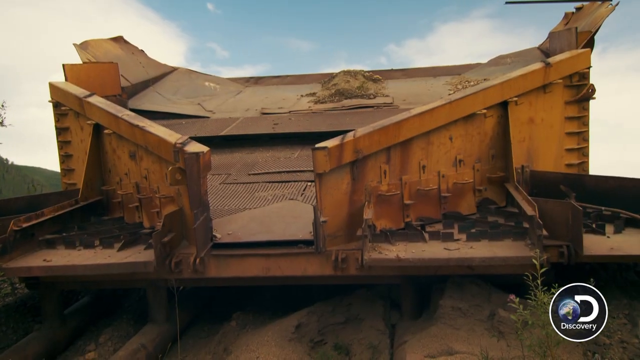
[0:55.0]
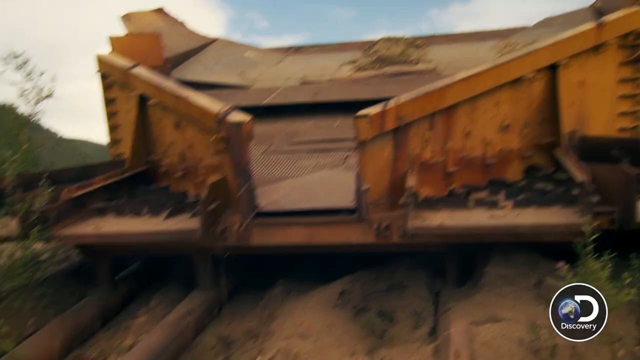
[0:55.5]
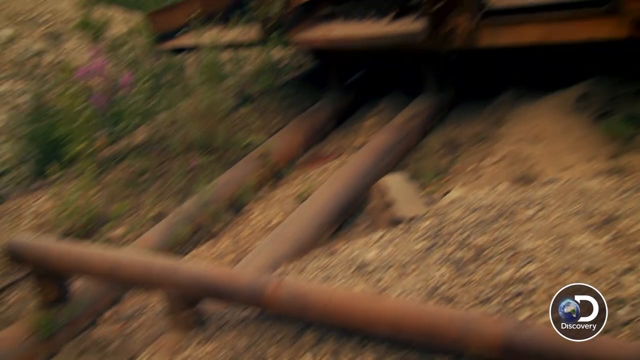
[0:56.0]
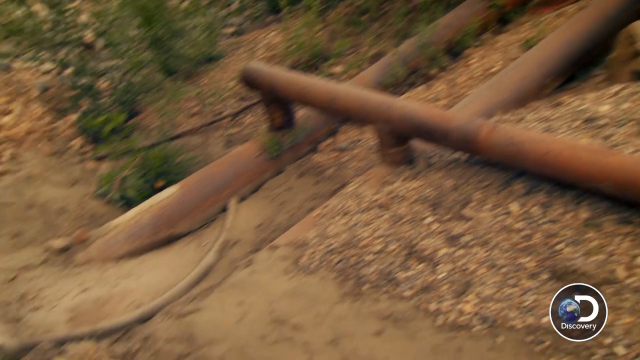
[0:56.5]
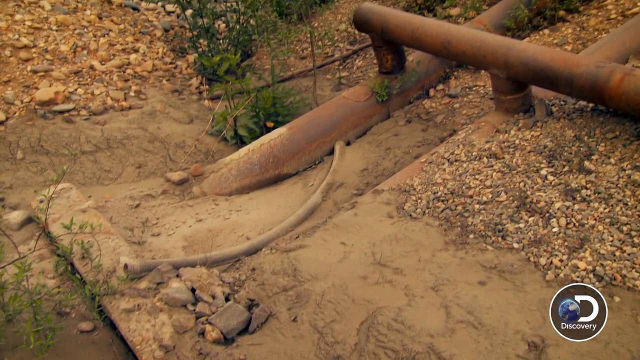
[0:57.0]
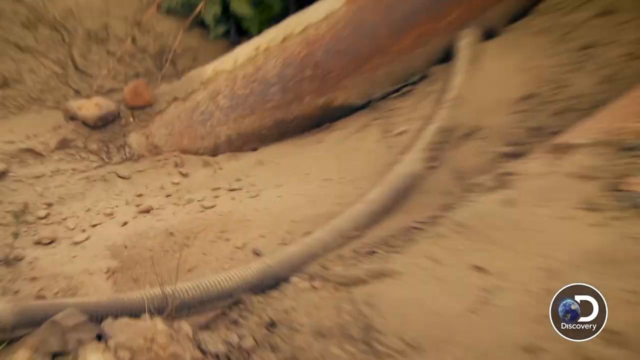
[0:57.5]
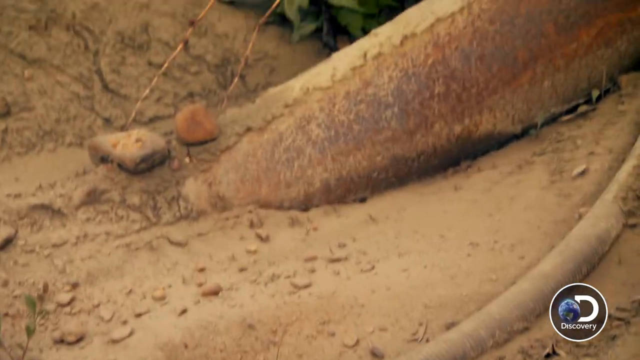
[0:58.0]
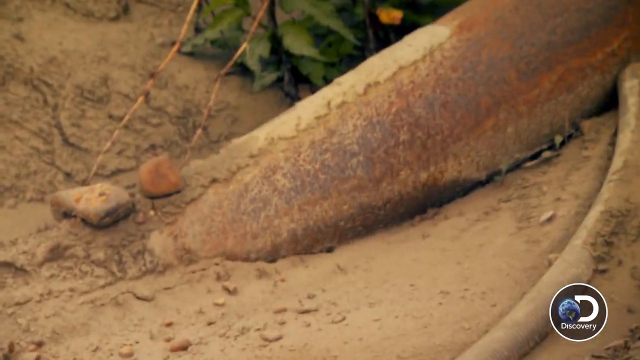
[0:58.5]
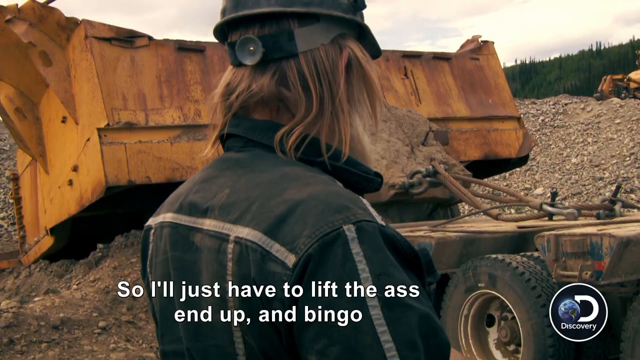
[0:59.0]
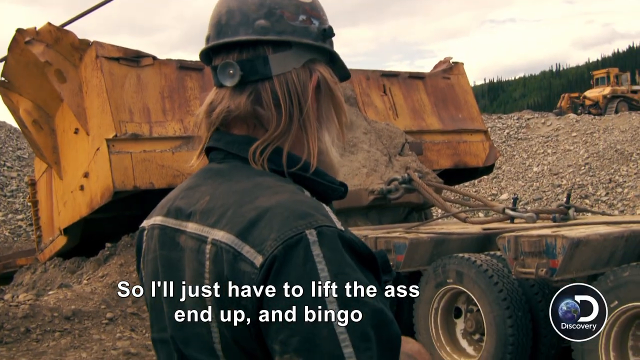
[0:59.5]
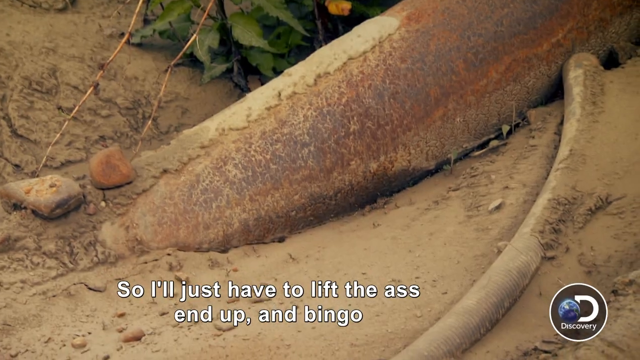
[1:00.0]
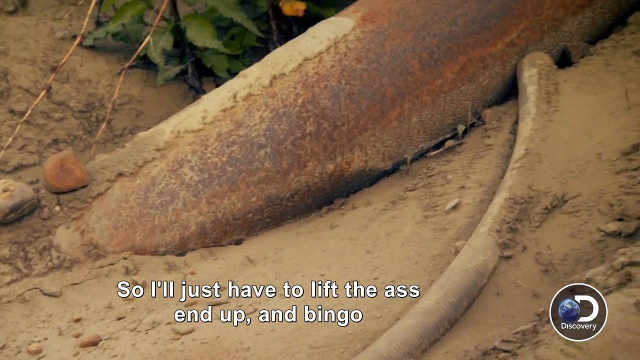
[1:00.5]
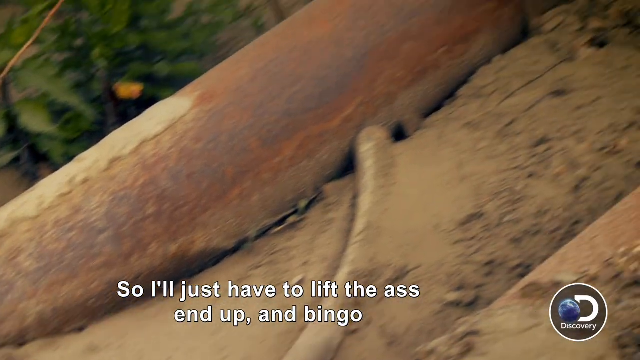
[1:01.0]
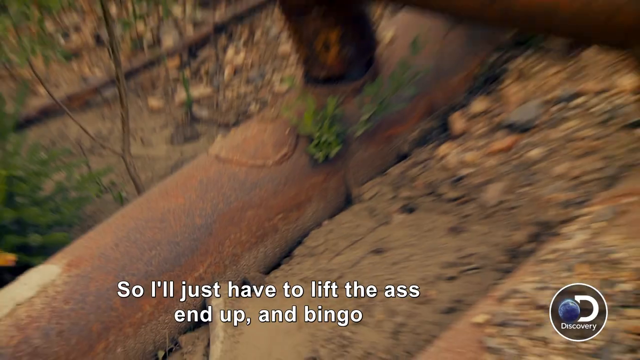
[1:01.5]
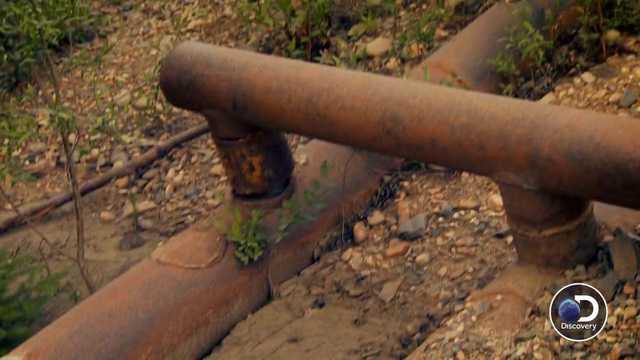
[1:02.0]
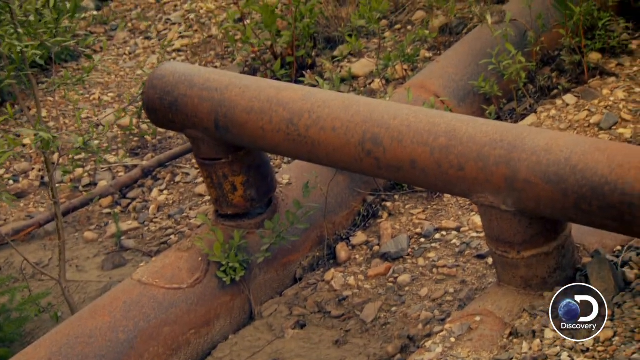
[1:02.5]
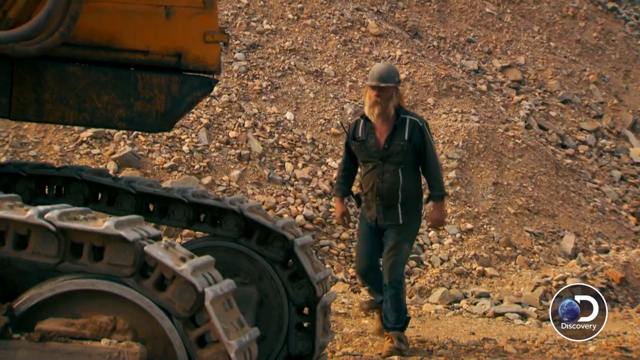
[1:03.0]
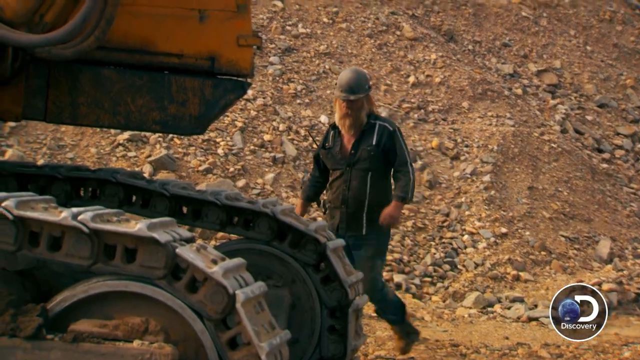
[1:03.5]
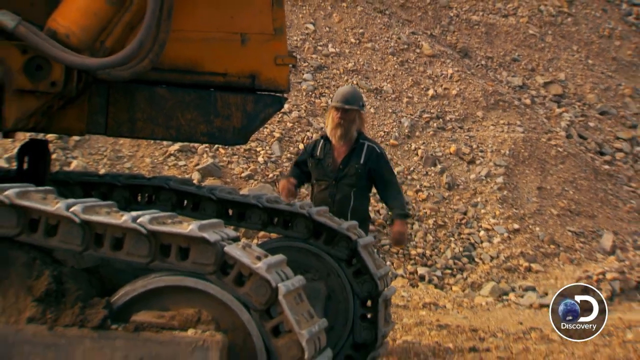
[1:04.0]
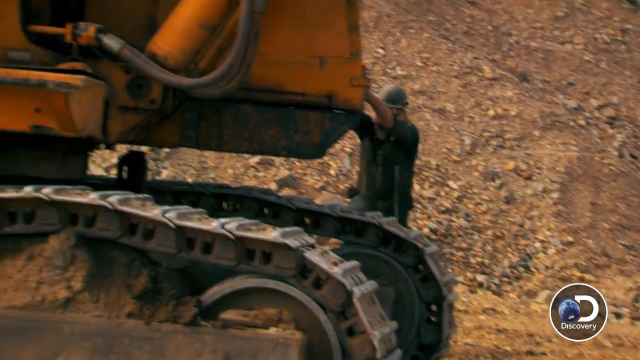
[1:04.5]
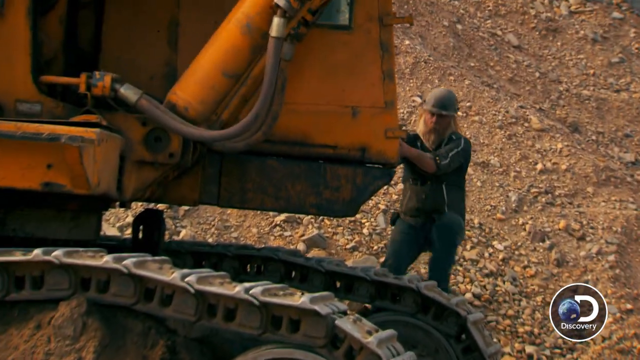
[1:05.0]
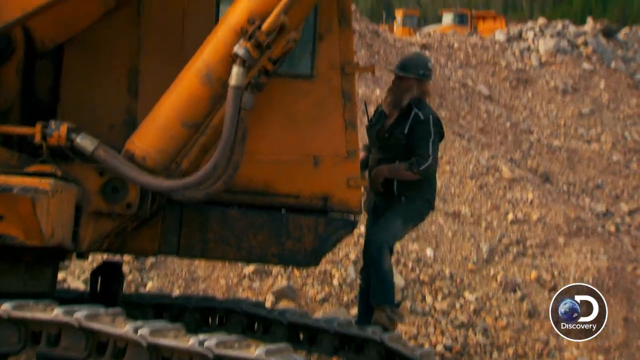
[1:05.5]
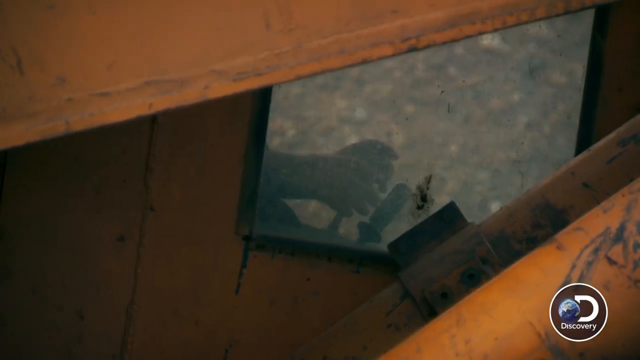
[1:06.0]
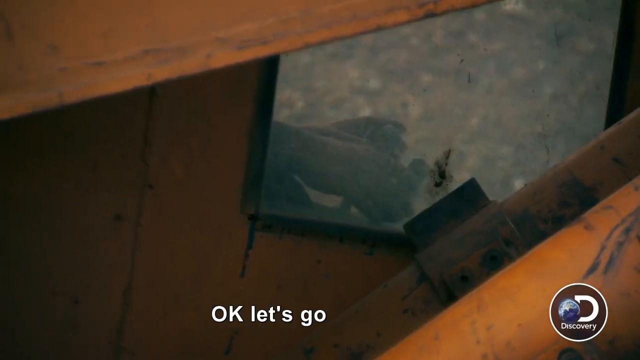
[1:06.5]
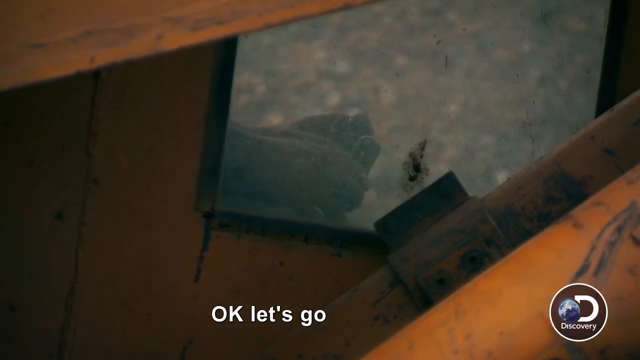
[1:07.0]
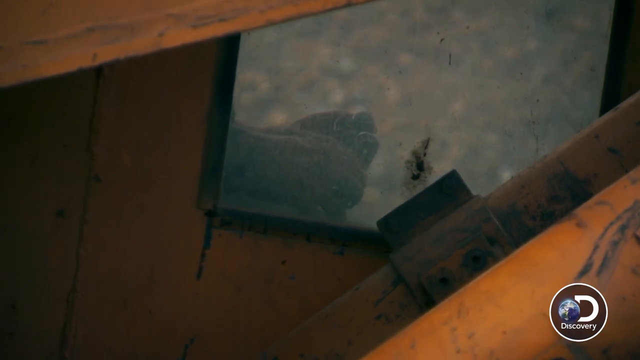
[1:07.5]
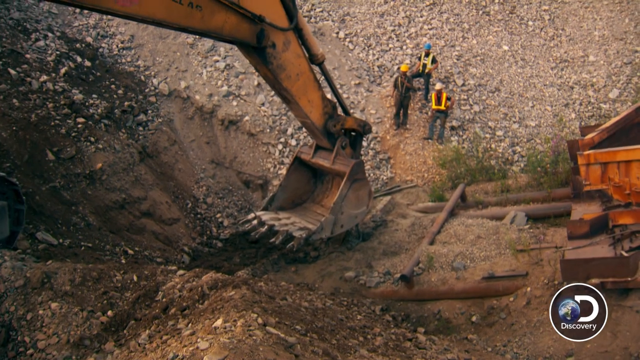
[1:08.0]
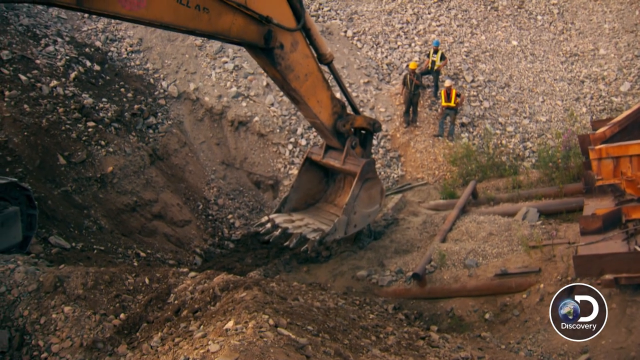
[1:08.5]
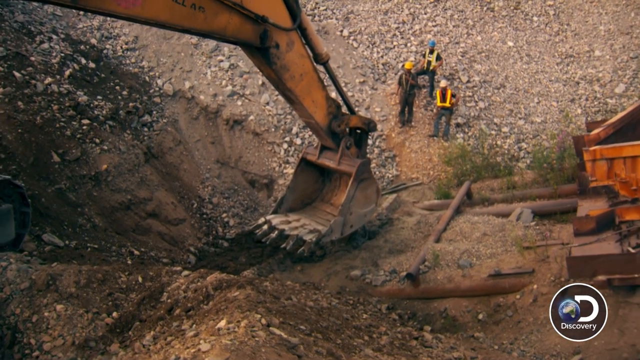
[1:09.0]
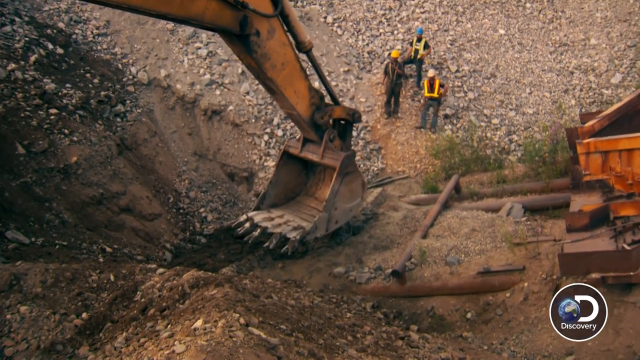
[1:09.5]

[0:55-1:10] The large machine from earlier, presumably a gold sorter, is shown. The view moves from the machine down into the dirt at the end of the machine, where large chunks of material lie, apparently filtered out and dumped. The back of a man's head is visible, with white text at the bottom: "So I'll just have to lift the ass end up and bingo." The view then zooms around, showing different parts of the machine and the pipes. The man starts climbing onto a large machinery vehicle, and the angle changes to show his hands moving. The vehicle is a crane, and its large scoop end is visible.